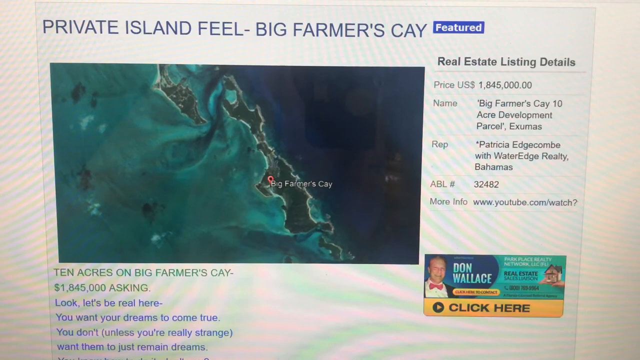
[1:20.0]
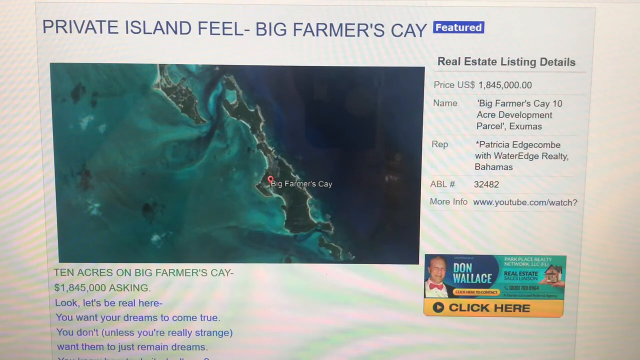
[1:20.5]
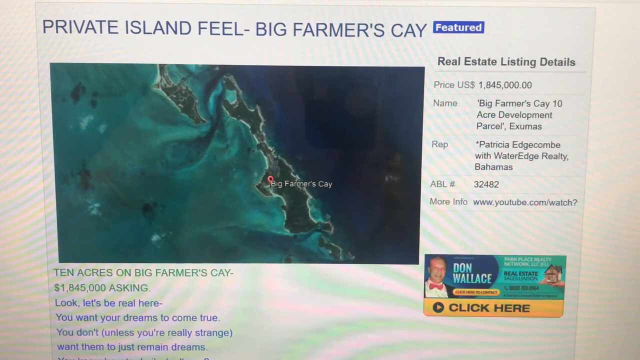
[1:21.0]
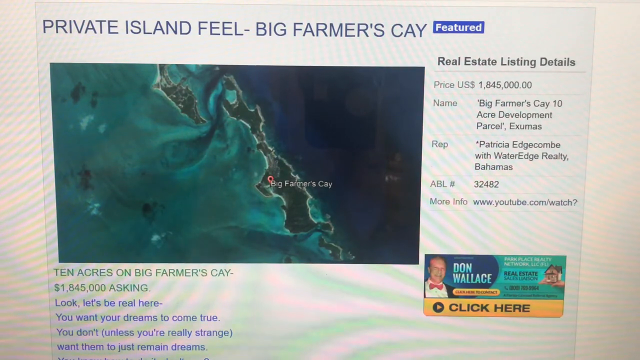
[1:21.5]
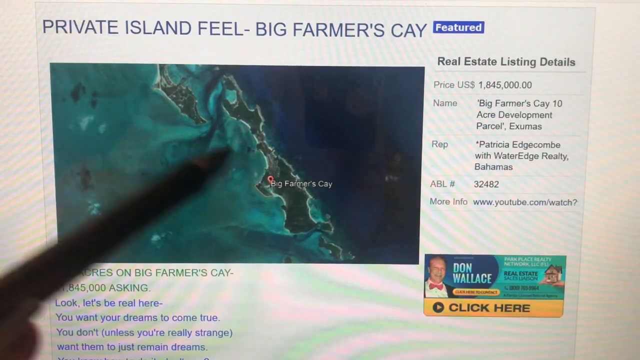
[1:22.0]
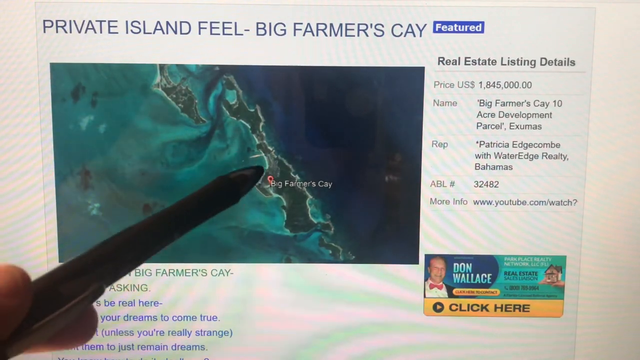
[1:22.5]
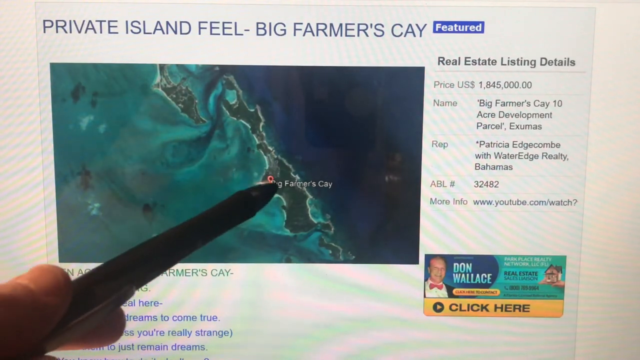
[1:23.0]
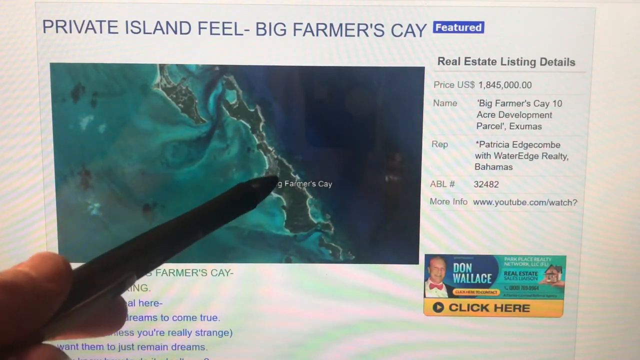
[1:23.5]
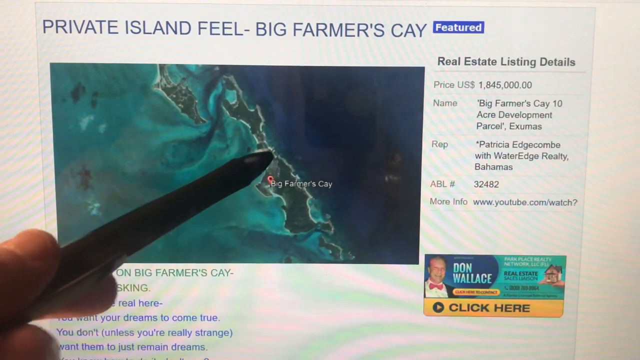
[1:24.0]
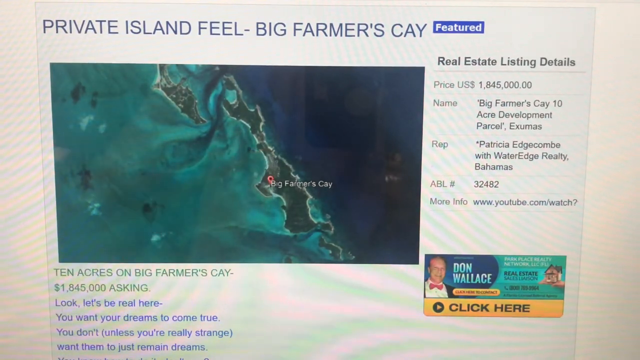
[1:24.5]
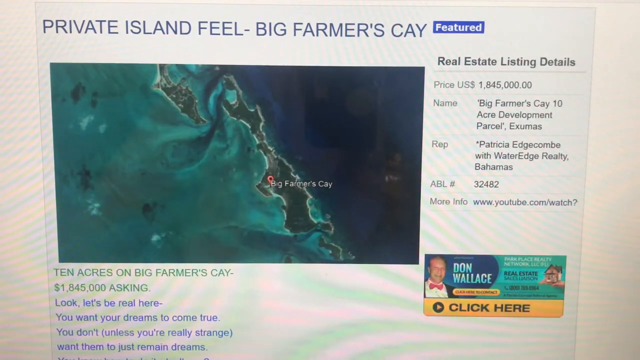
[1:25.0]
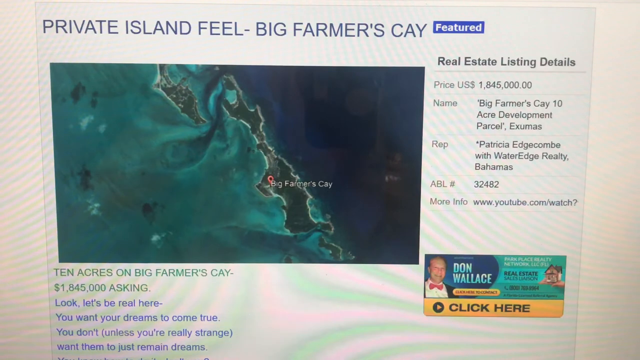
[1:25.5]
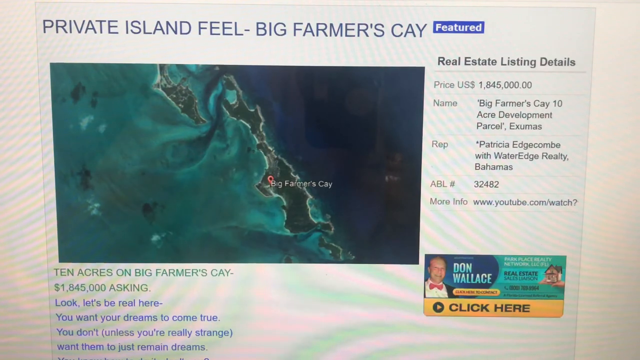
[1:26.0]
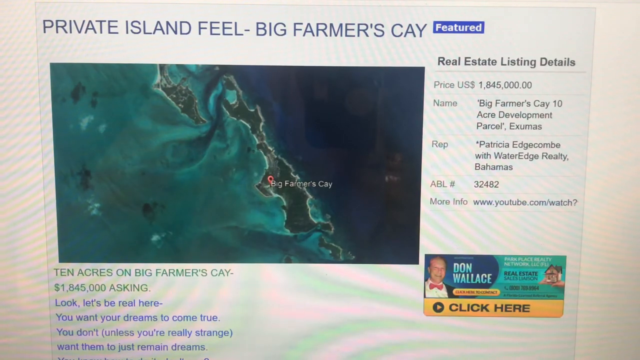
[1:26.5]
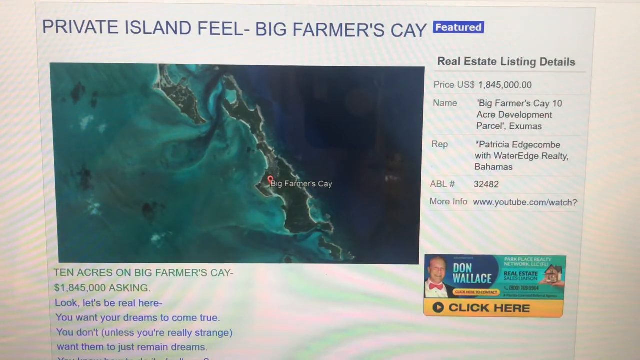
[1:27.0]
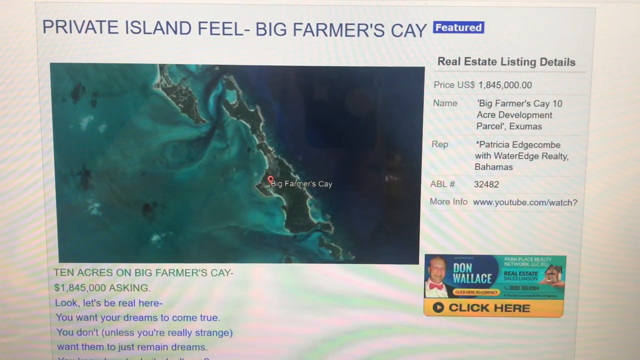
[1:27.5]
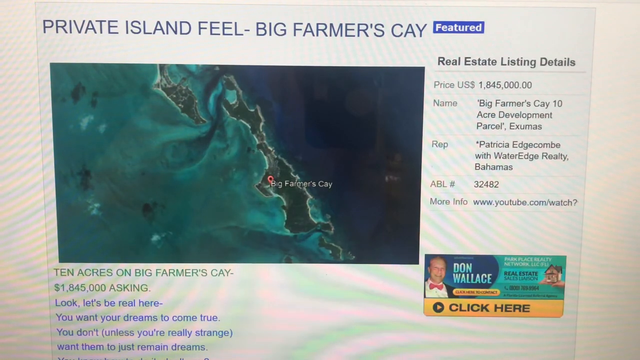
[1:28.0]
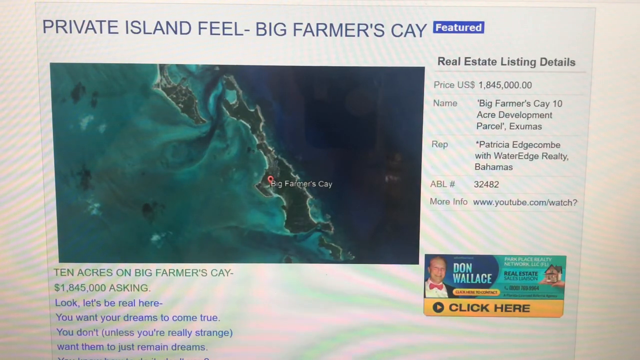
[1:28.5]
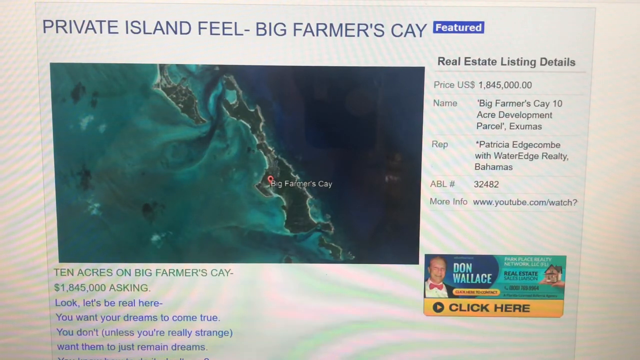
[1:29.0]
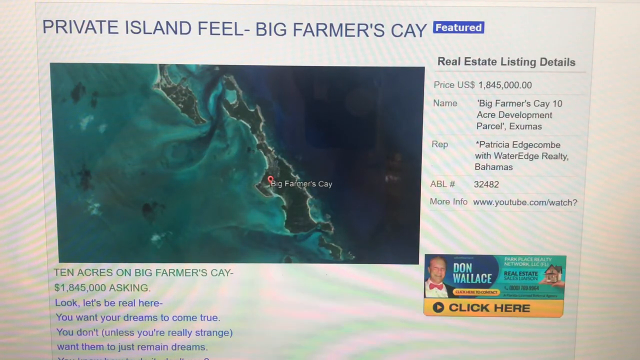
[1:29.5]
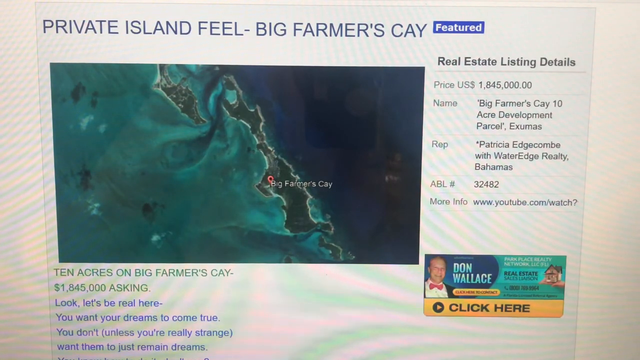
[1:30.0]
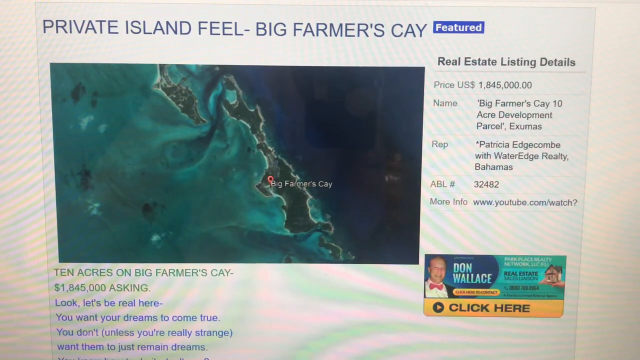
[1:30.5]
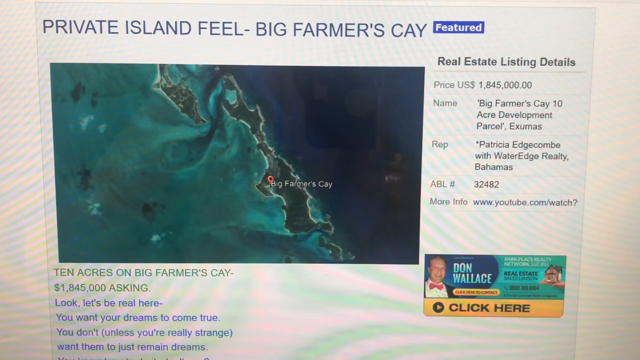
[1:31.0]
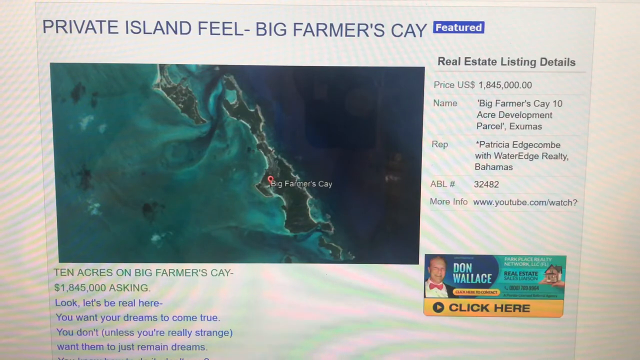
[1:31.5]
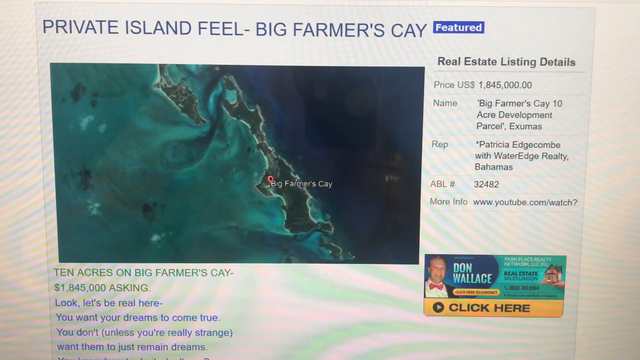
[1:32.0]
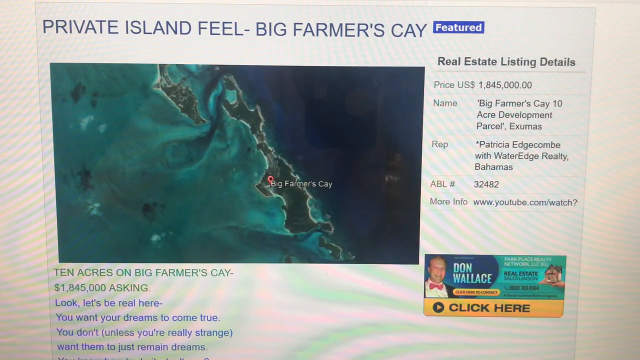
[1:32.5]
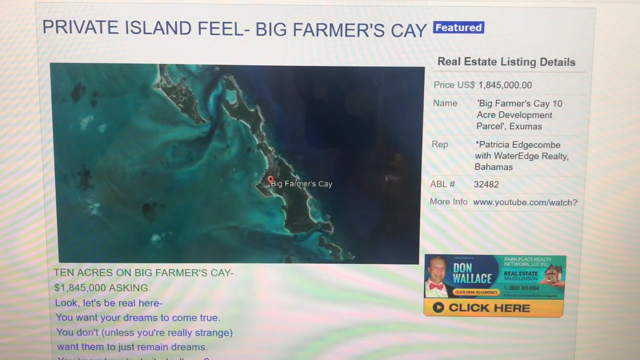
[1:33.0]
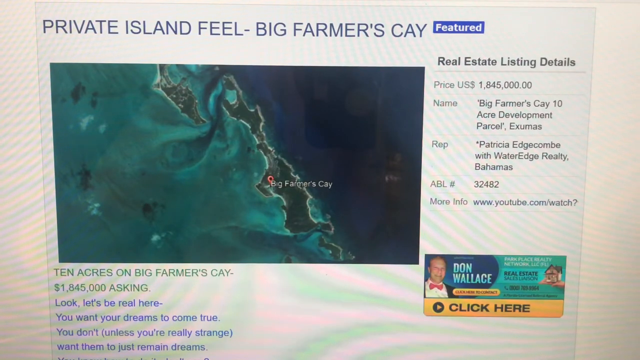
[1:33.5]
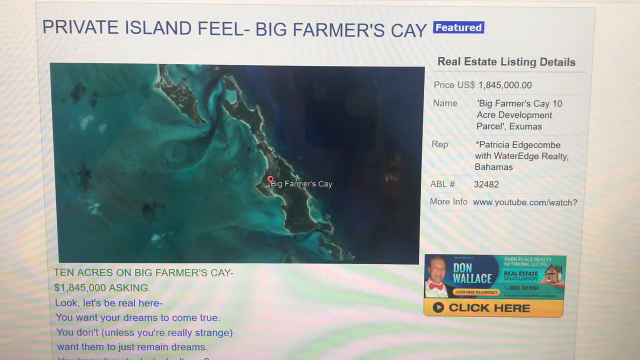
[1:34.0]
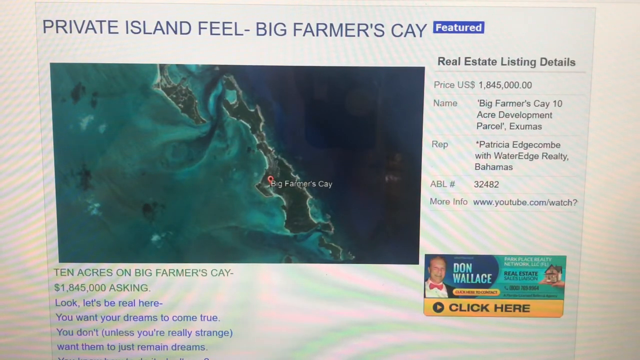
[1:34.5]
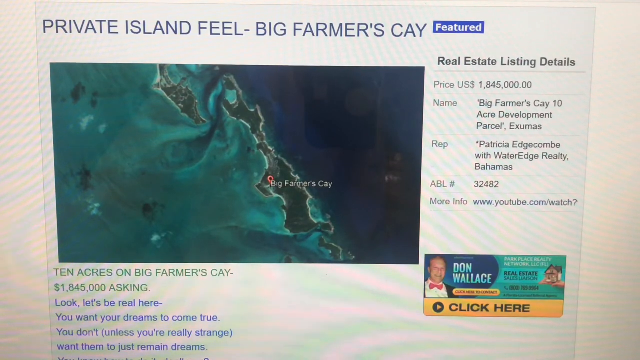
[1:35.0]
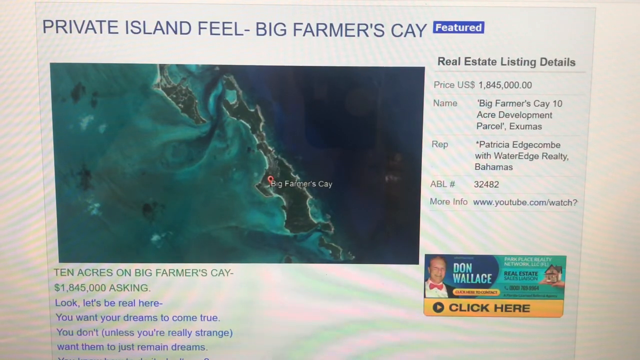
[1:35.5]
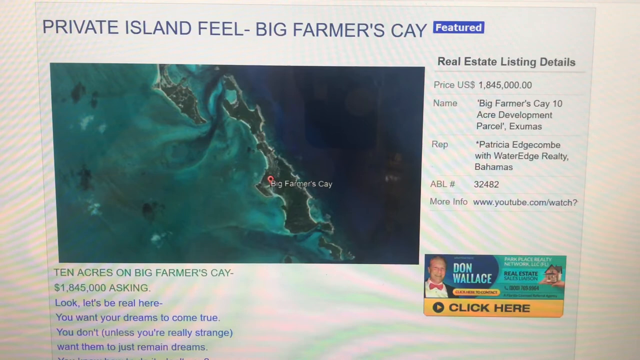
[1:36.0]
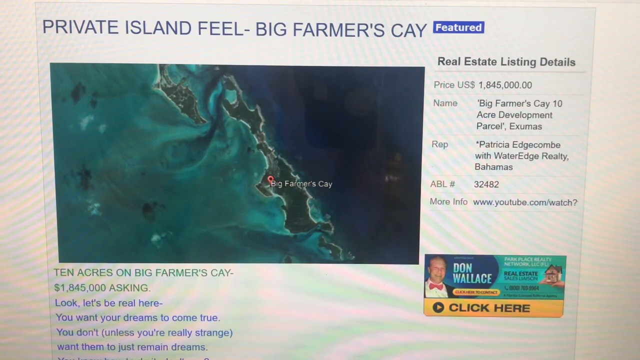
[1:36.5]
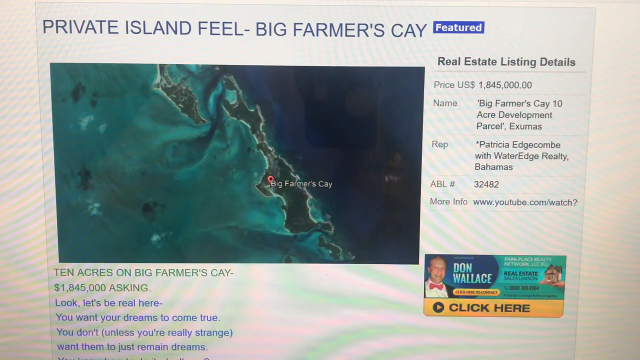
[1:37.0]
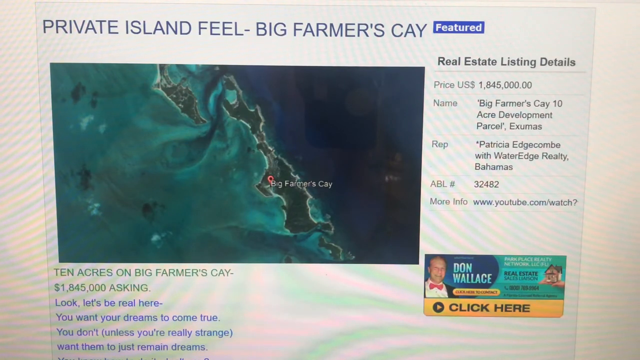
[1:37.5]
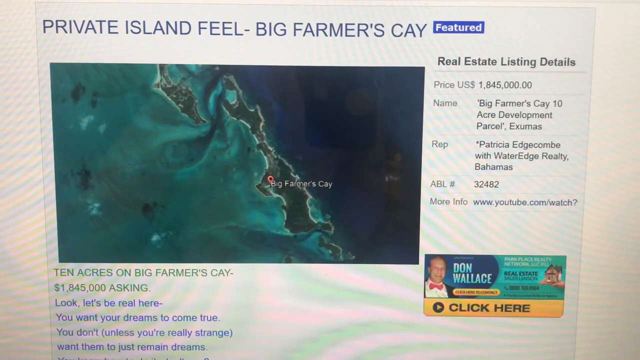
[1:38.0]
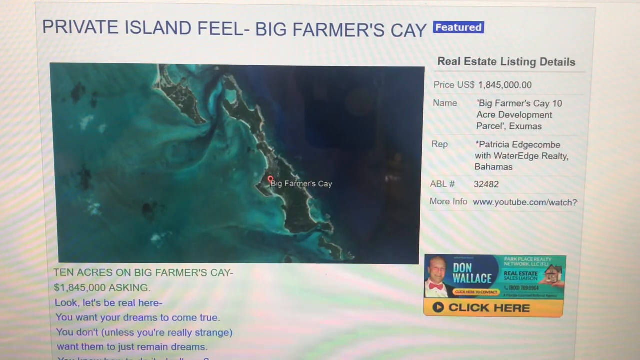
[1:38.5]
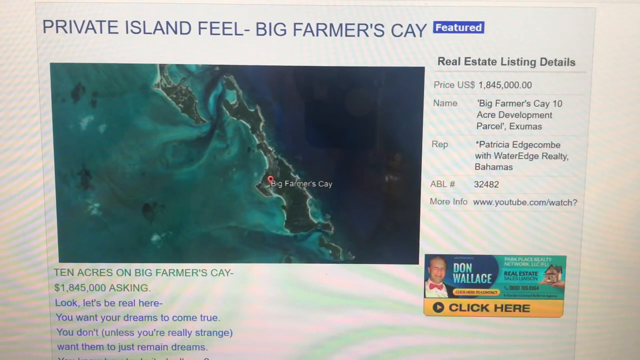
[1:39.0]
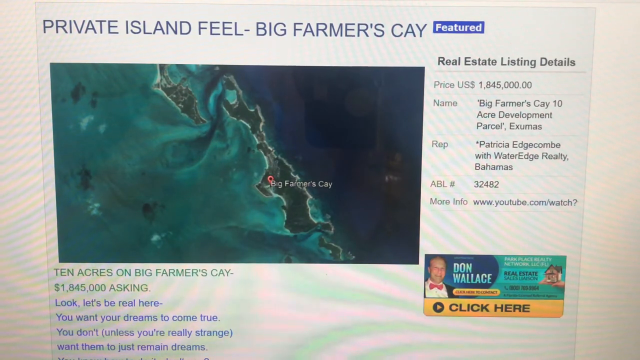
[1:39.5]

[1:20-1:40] The pen presses on the screen to show where the acres are on the island, on the left side where the shallow waters are.